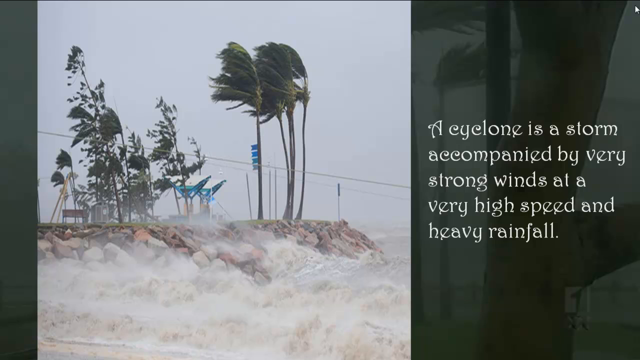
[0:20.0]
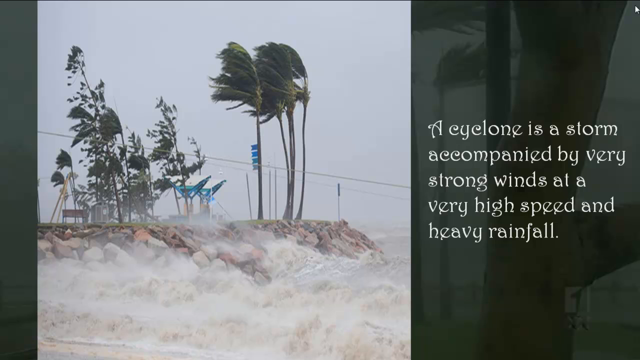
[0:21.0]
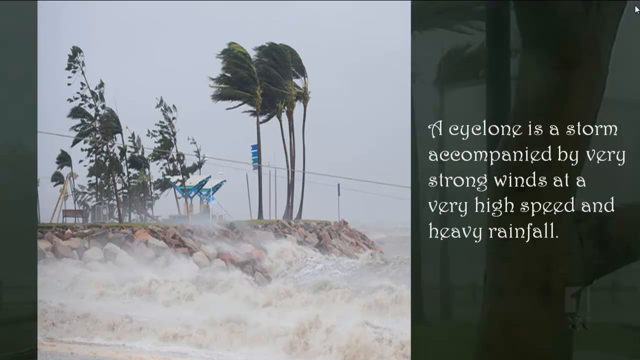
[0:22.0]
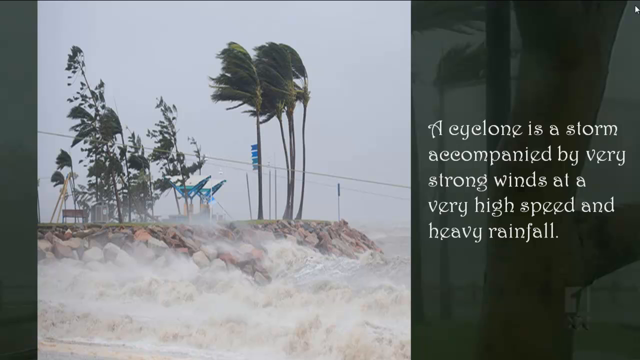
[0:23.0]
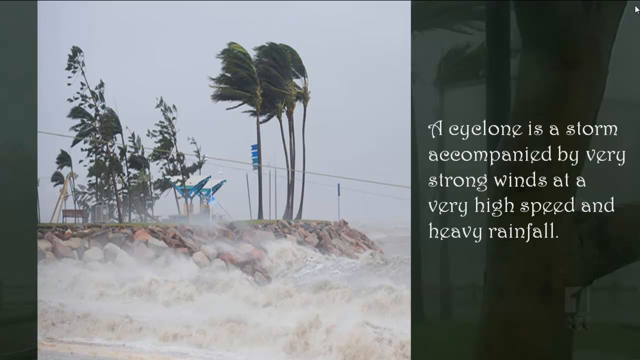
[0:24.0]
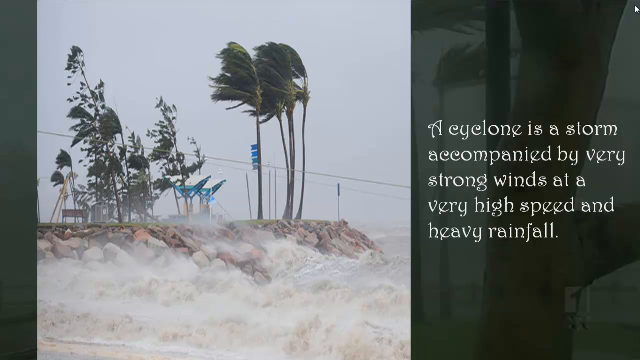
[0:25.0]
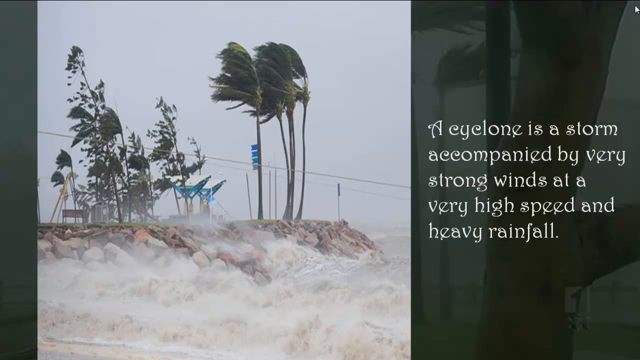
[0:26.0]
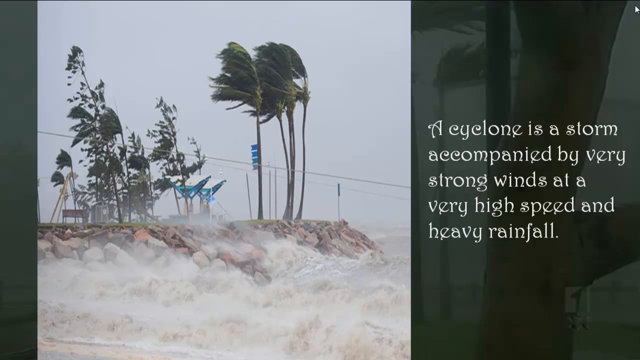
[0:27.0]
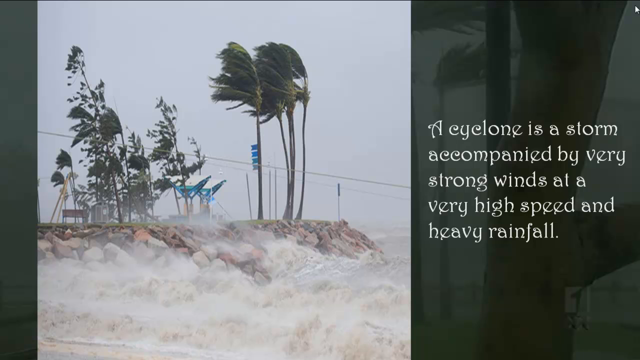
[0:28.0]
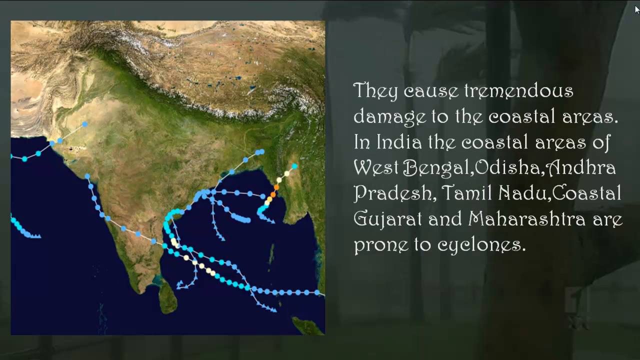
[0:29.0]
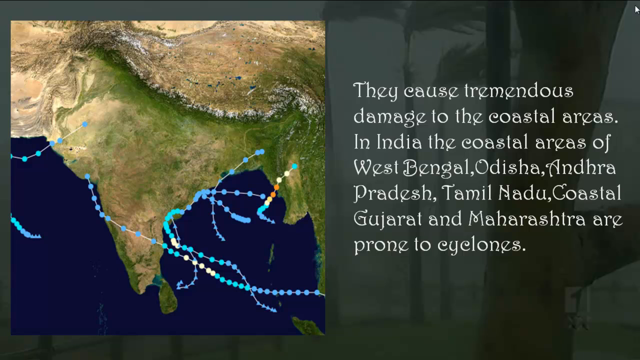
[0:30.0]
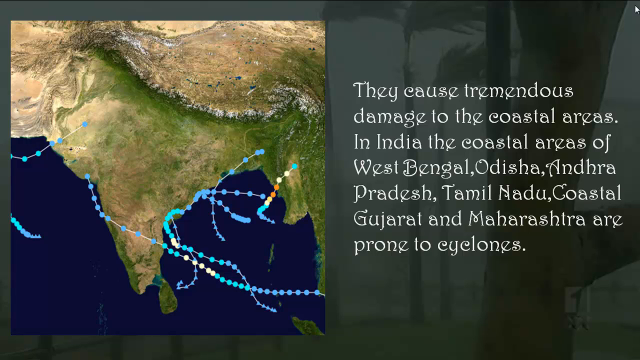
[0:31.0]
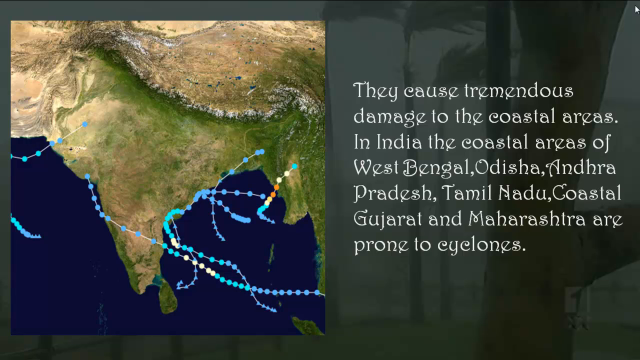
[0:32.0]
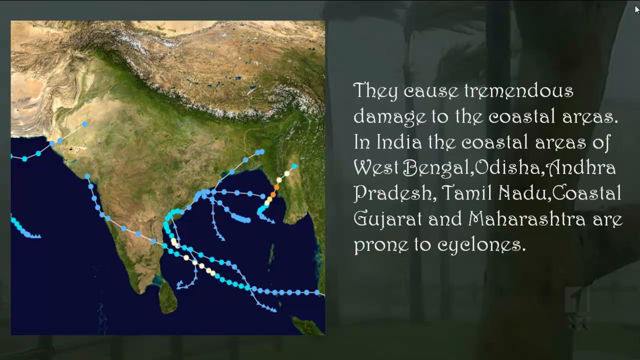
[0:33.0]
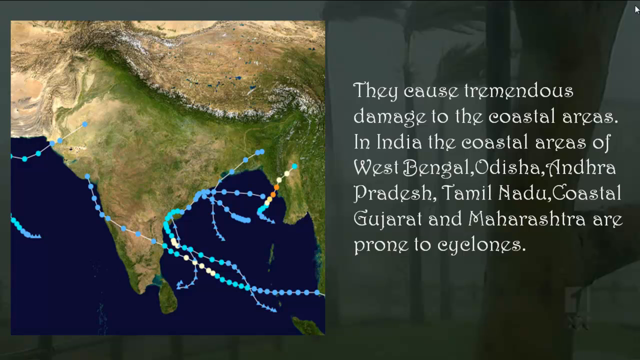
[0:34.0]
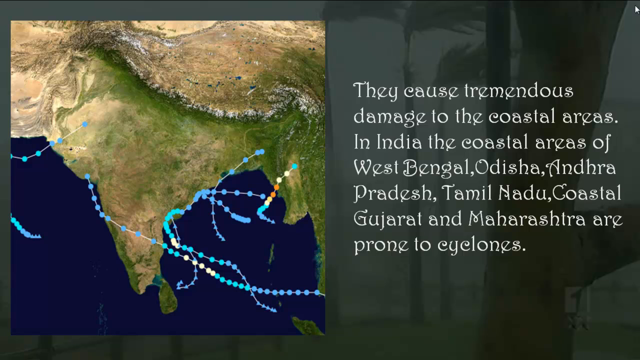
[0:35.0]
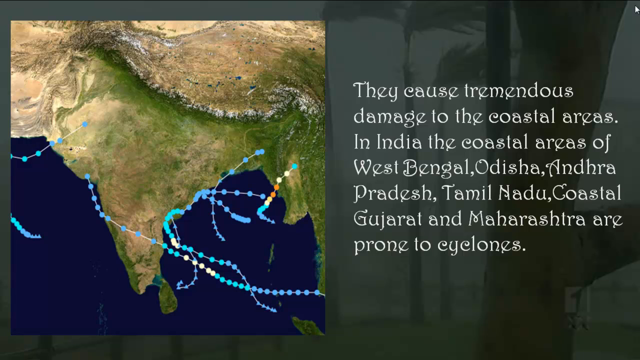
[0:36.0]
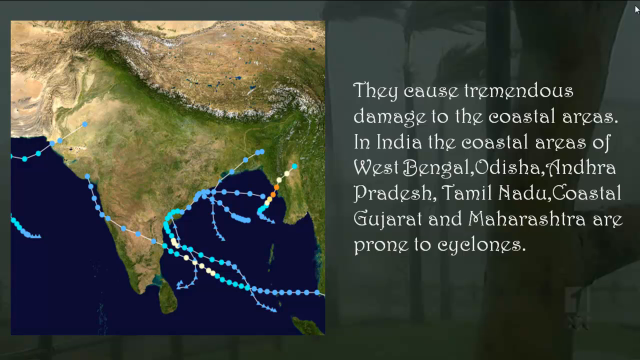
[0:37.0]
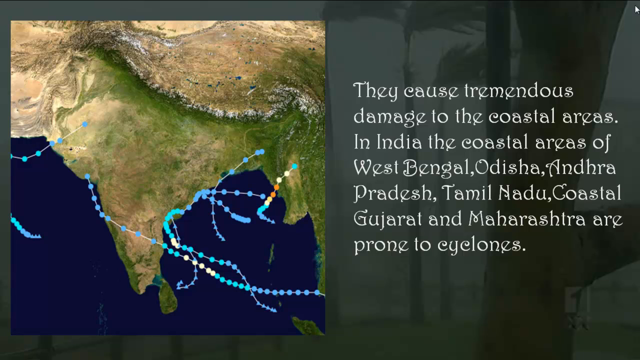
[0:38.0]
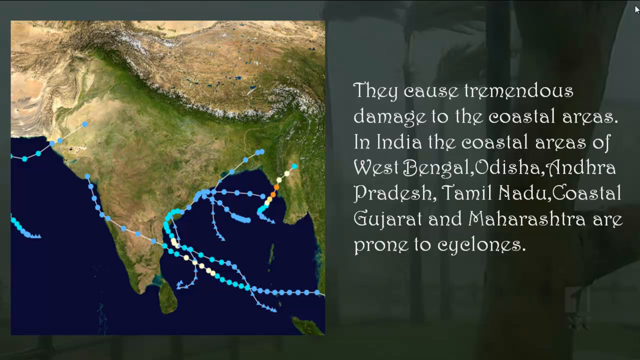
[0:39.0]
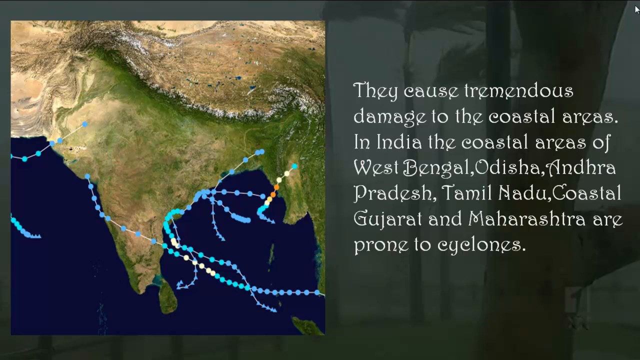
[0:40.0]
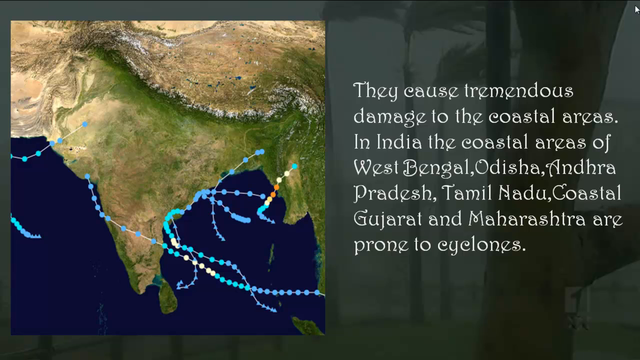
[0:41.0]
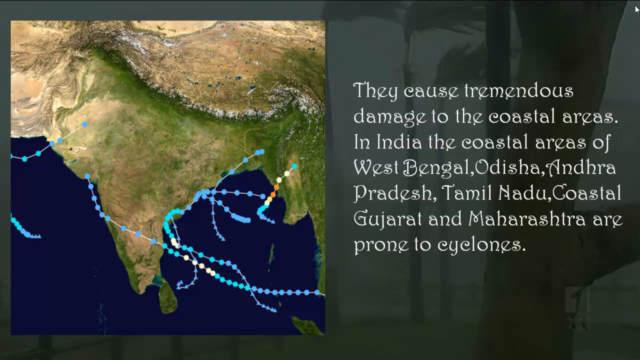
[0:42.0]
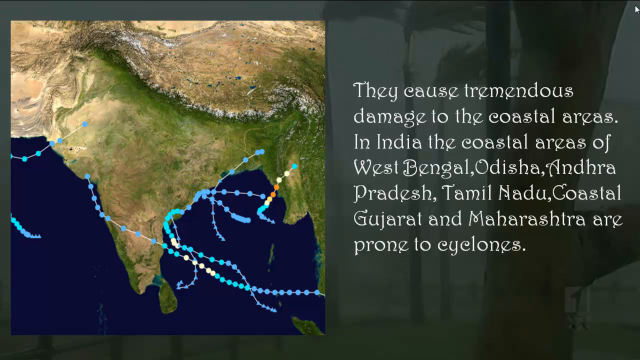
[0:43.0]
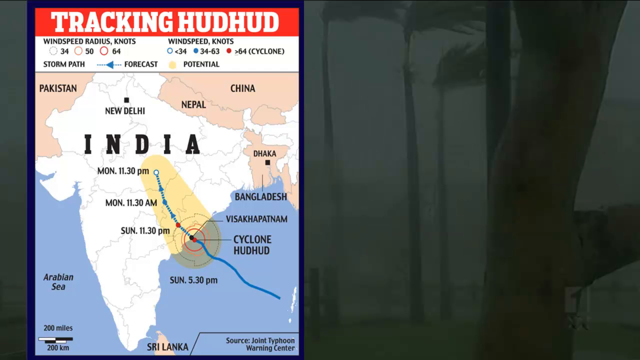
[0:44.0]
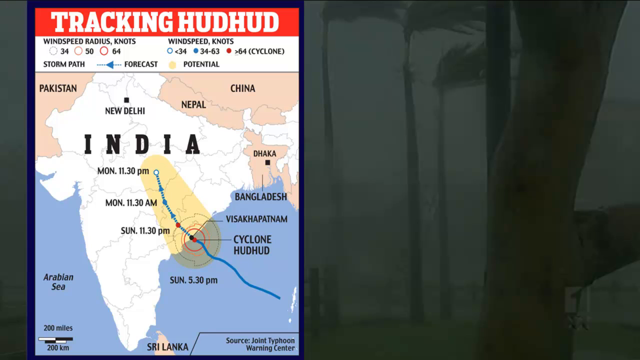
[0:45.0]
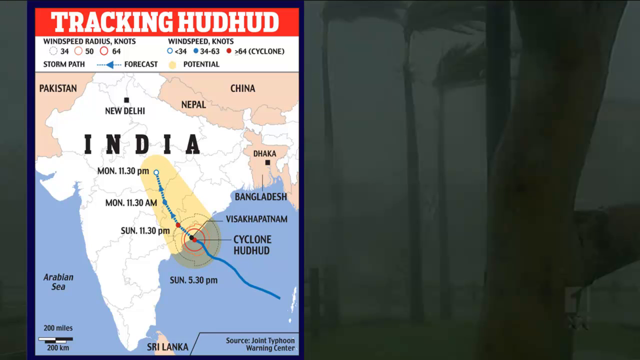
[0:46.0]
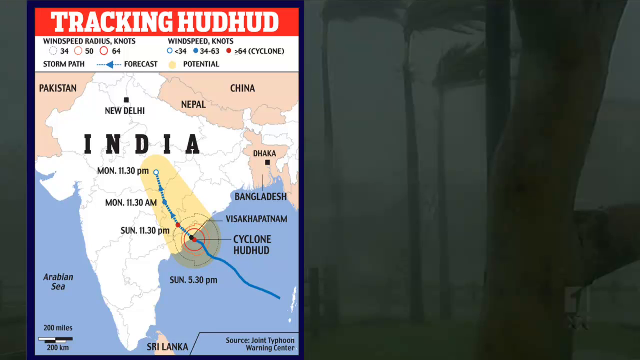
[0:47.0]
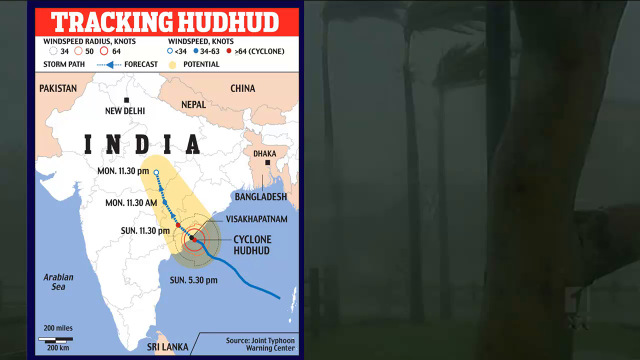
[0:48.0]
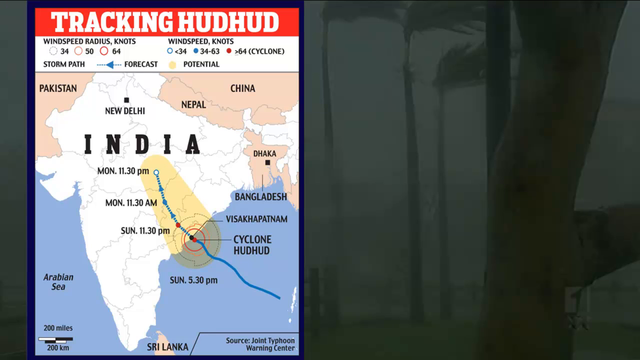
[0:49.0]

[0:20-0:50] The slide defining a cyclone as a storm accompanied by very strong wind at very high speed and very high rainfall remains on screen. On the left, a couple of very tall trees are struck by wind, their leaves blown behind them, with a great mist behind them, and the sky is very cloudy. Next comes a map of India showing waves of wind moving in and striking India and also Bangladesh. Text on the right says "it caused tremendous damage to coastal areas in India" and lists coastal areas such as West Bengal, Odisha, Tamil Nadu and Maharashtra as prone to cyclones. A tracking view of India then shows how the cyclone enters India, set on a yellow background, with the dates and times the cyclone hits India, the radius, and the wind speed in knots.